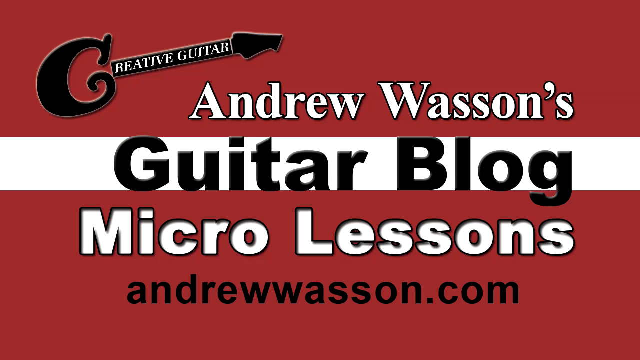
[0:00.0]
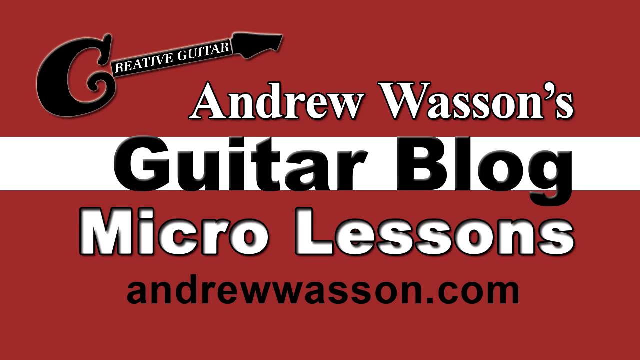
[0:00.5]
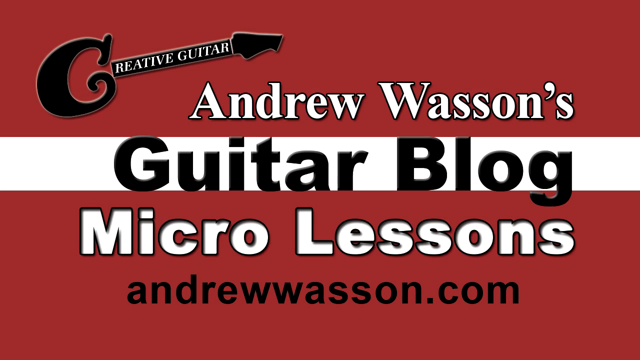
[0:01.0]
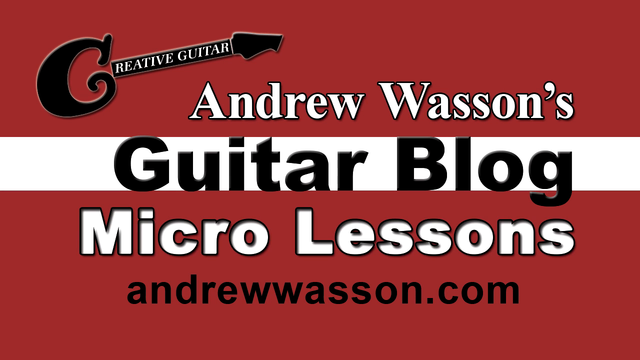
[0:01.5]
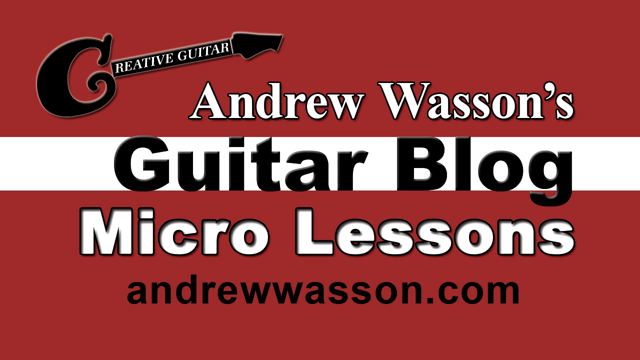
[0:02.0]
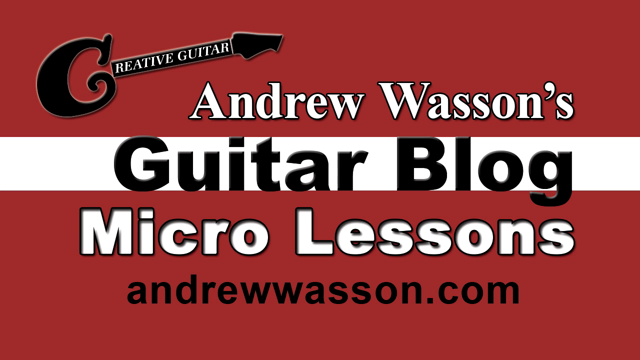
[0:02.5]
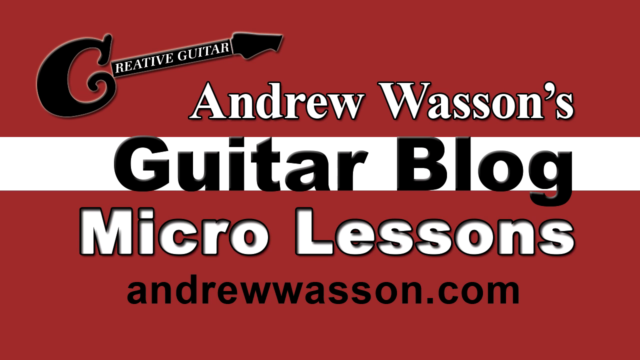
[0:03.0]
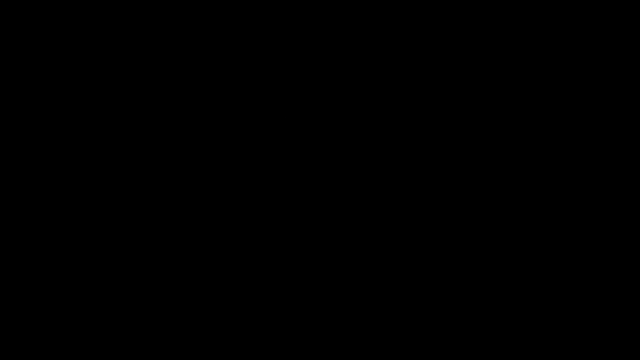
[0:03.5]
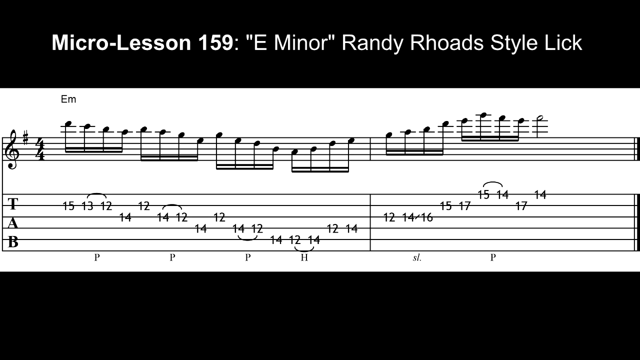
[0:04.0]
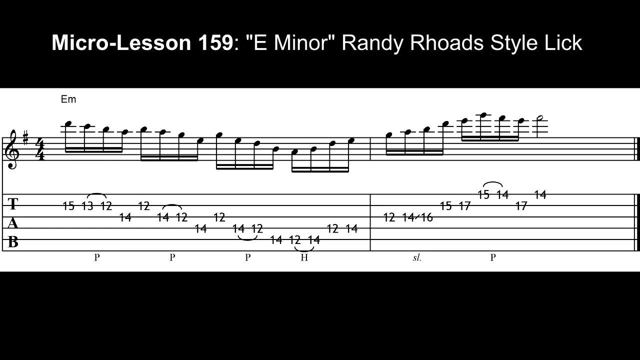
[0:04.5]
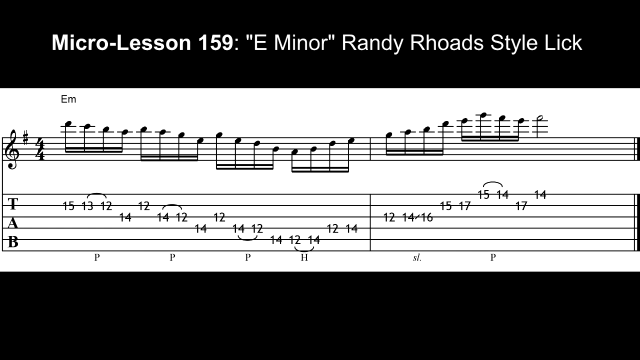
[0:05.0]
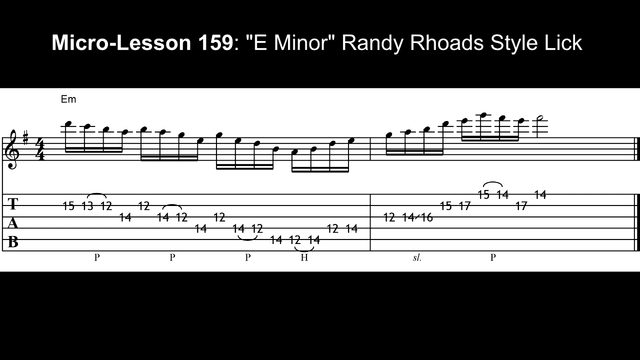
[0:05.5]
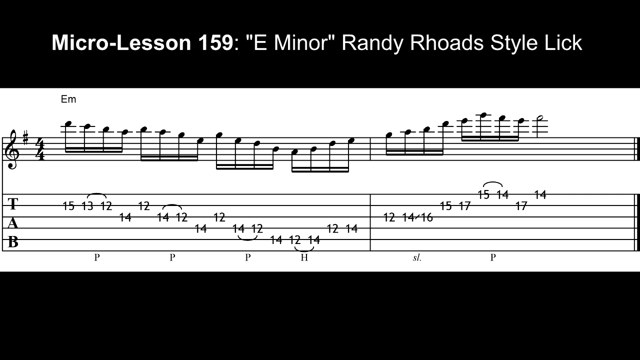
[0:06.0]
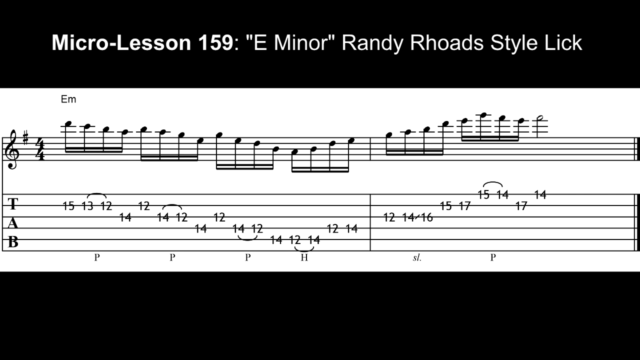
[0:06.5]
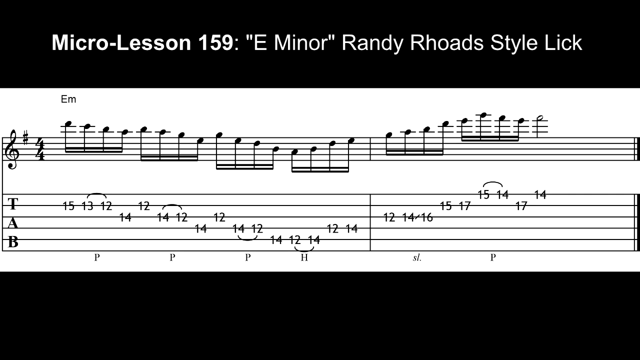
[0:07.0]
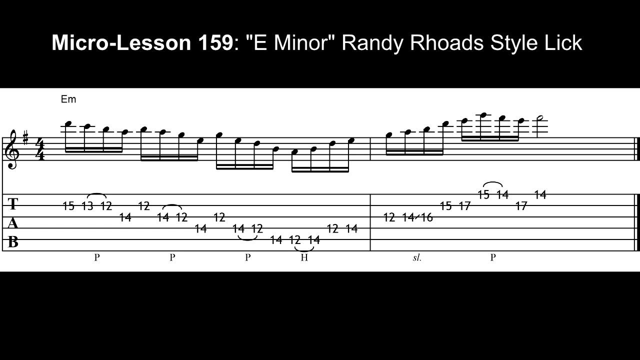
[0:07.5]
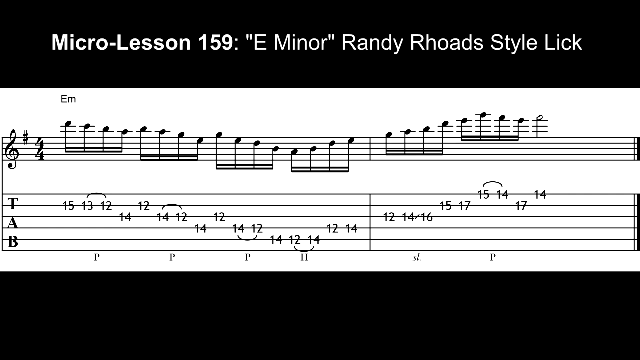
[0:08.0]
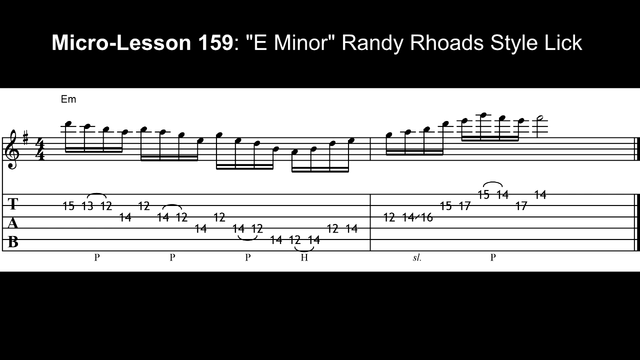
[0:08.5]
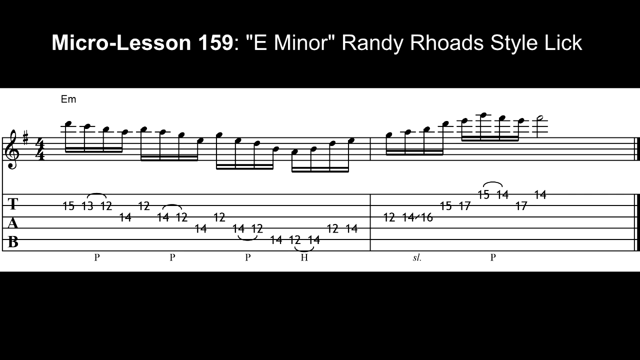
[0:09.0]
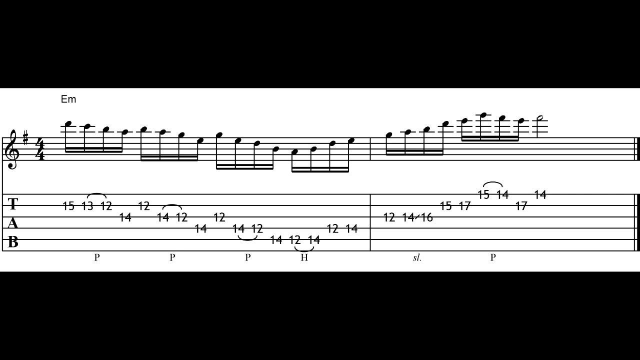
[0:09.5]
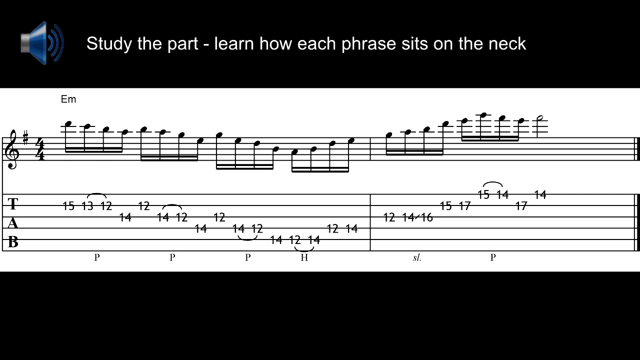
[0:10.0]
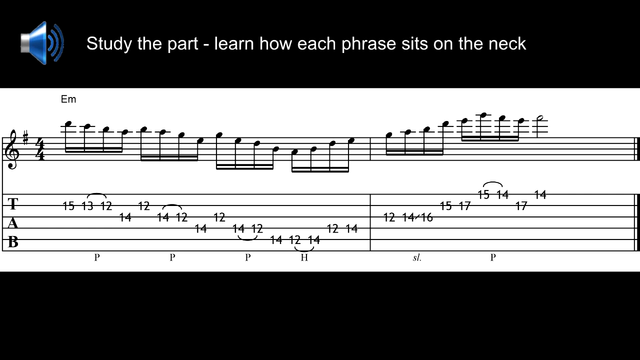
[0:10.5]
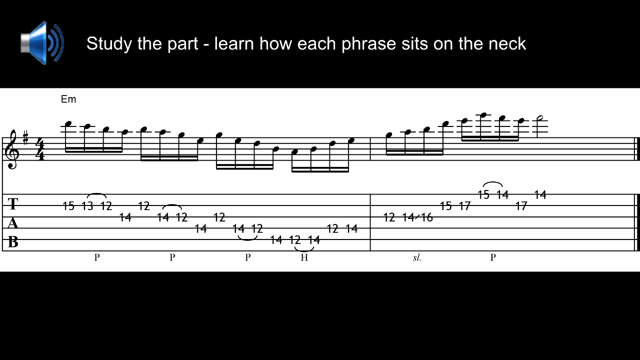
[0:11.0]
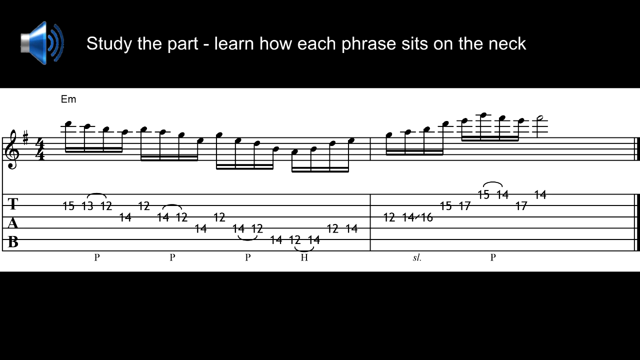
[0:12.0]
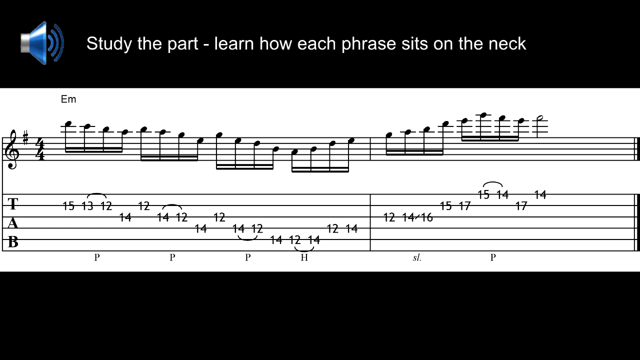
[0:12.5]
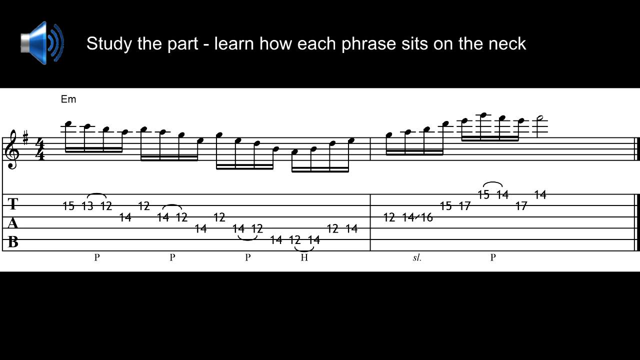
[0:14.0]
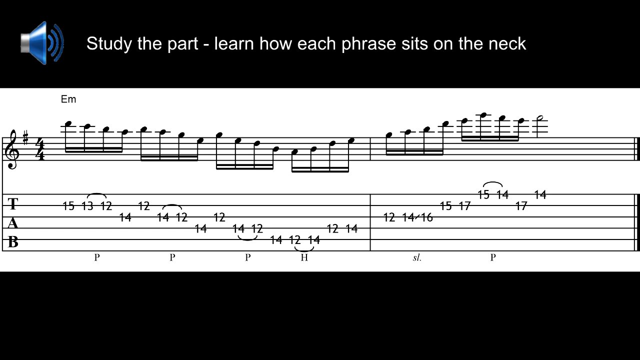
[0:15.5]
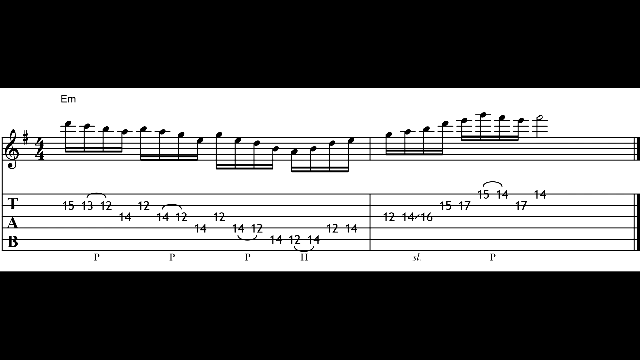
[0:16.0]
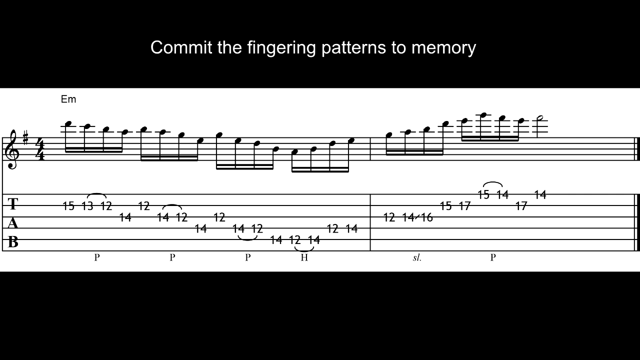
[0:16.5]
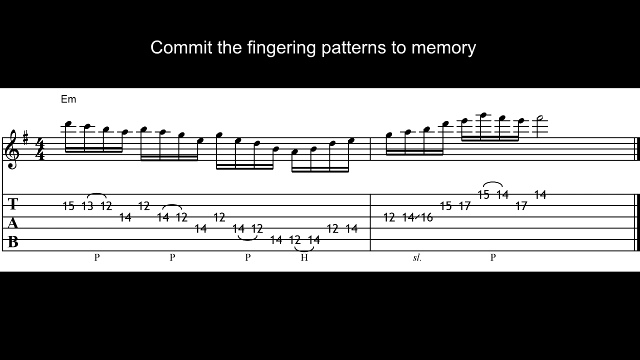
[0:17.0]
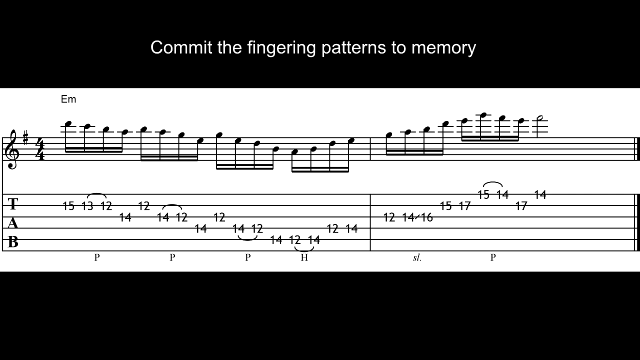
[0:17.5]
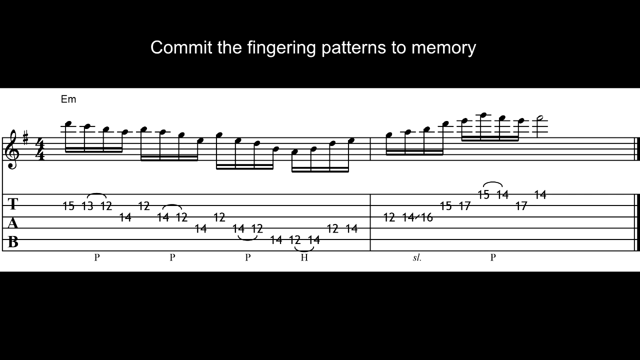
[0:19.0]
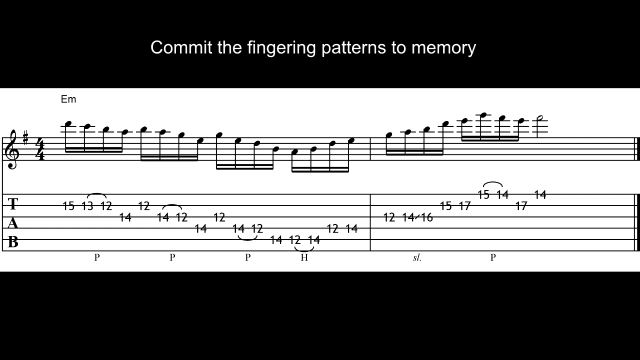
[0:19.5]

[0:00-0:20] The video opens on an ad showing a guitar with a G in the top left corner, with the text "Andrew Wasson's guitar blog" and "microlessonsandrewwasson.com." The background is red with a white stripe running down the middle. A music sheet follows, titled "micro lesson 159 E minor Randy Rhodes style lick," with music notes and a tab area; the notes are on the bottom. At the top, next to a small speaker sound icon, text reads "study the part, learn how each phrase sits on the neck," and then the top reads "commit the fingering patterns to memory." The numbers in the tab area are 15, 13, 12, 14, 12, 14, 12, 14, 12, 14, 12, 14, 12, 14, 12, 14, 12, 14, 16, 15, 17, 15, 14.